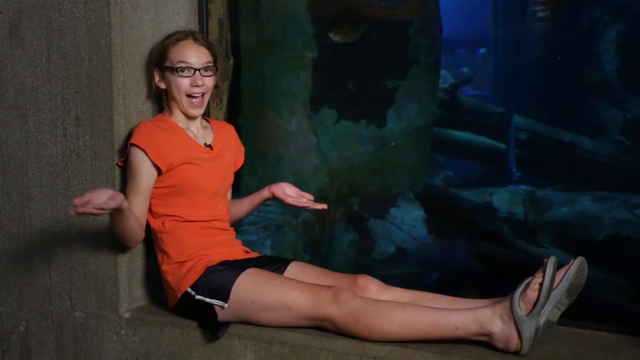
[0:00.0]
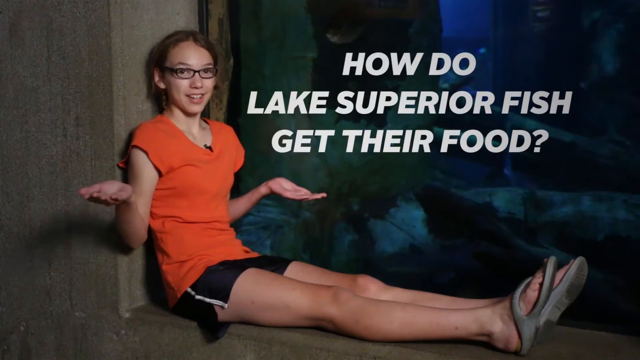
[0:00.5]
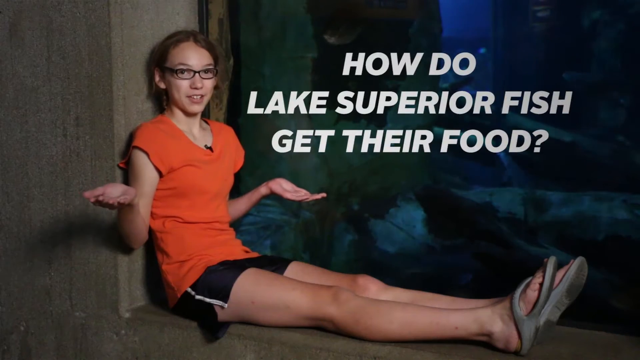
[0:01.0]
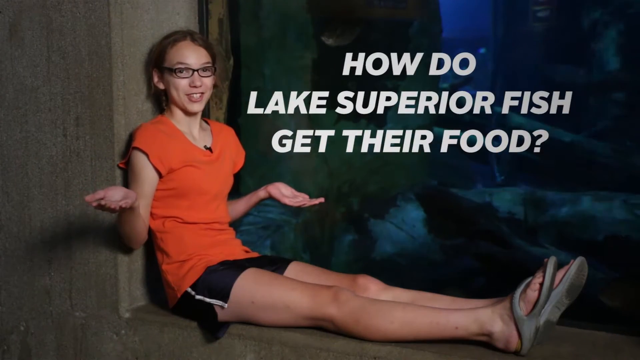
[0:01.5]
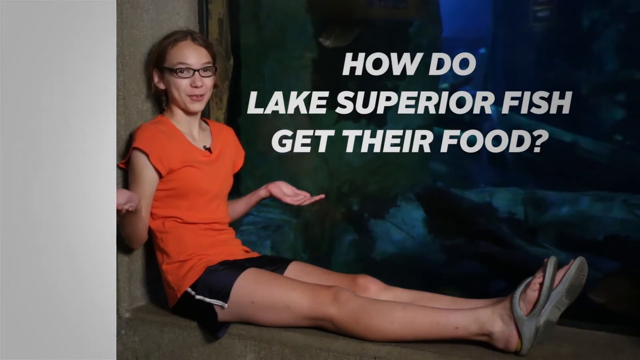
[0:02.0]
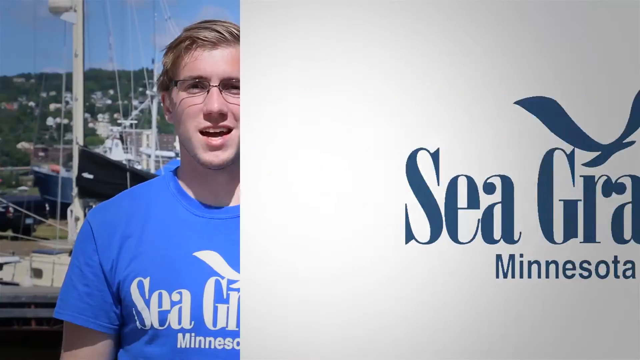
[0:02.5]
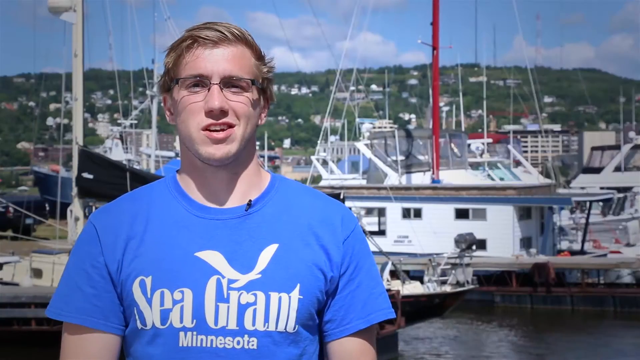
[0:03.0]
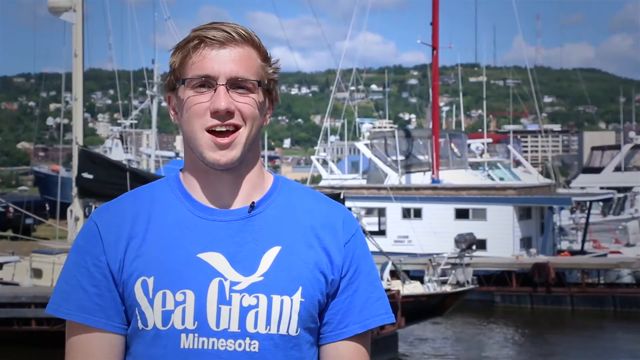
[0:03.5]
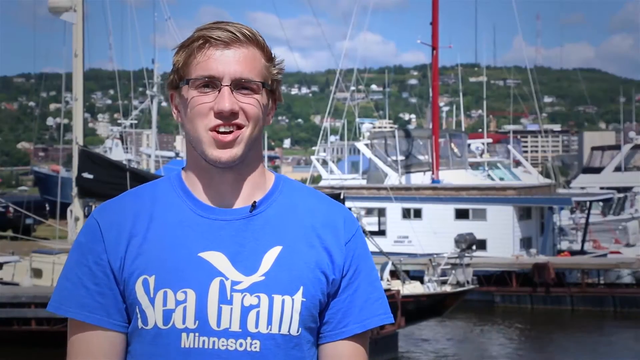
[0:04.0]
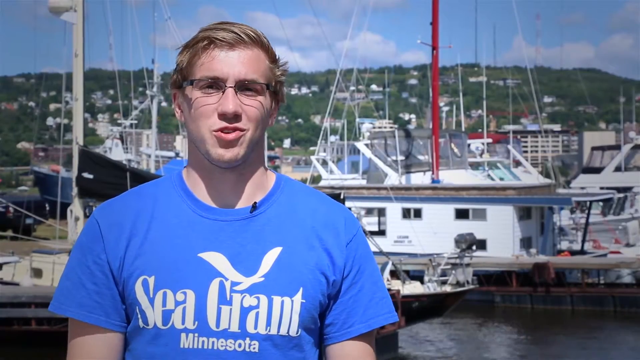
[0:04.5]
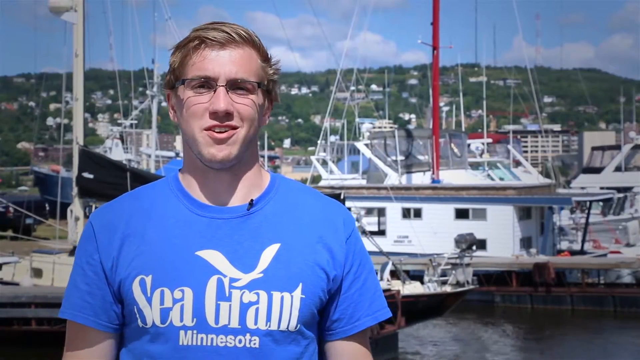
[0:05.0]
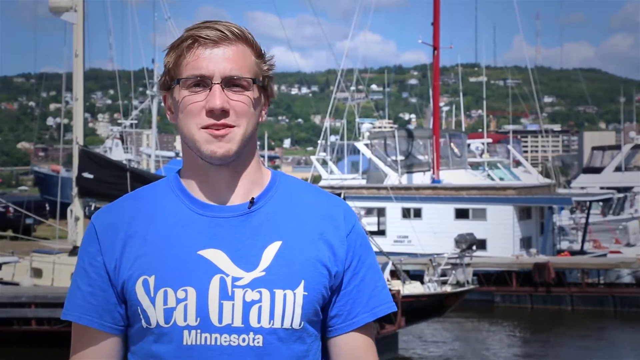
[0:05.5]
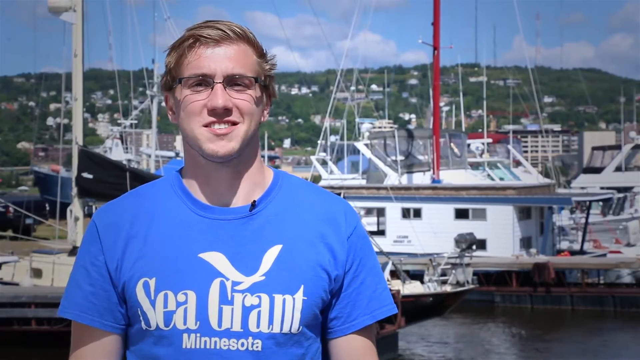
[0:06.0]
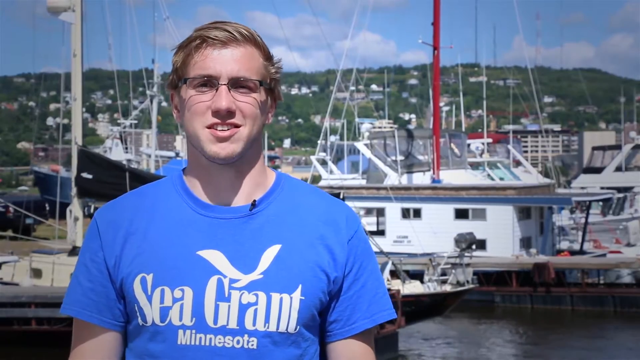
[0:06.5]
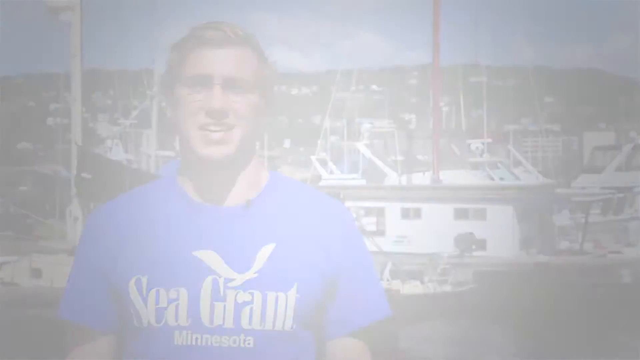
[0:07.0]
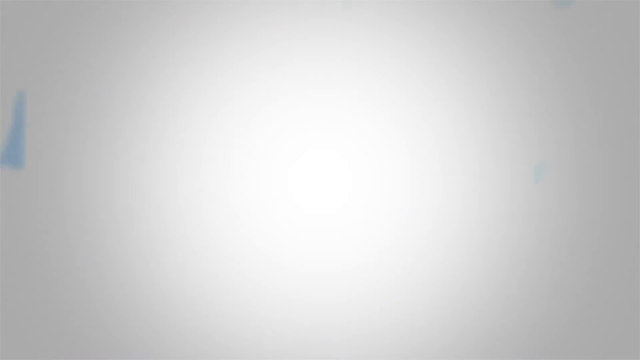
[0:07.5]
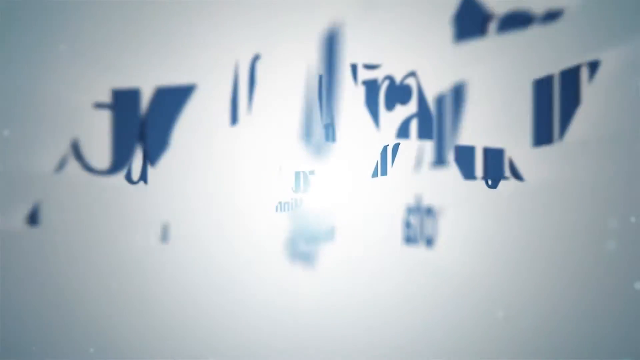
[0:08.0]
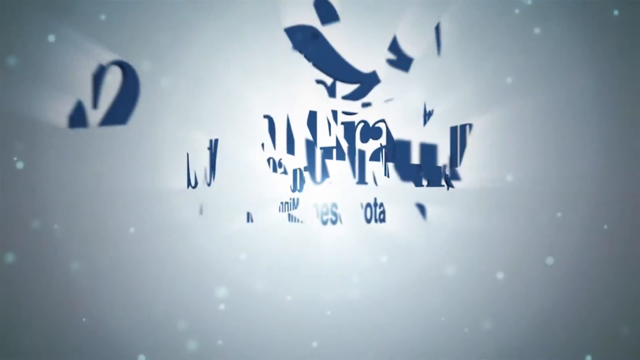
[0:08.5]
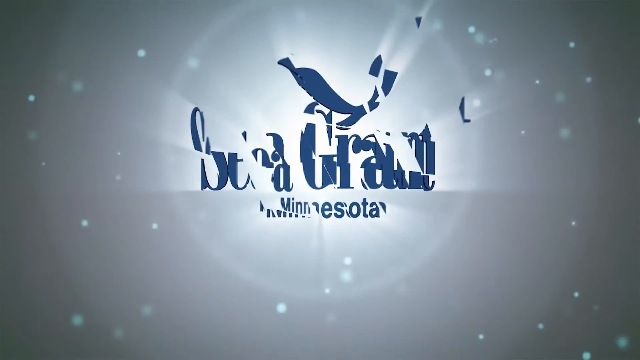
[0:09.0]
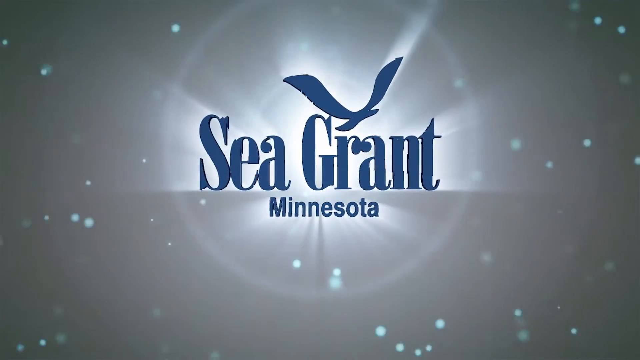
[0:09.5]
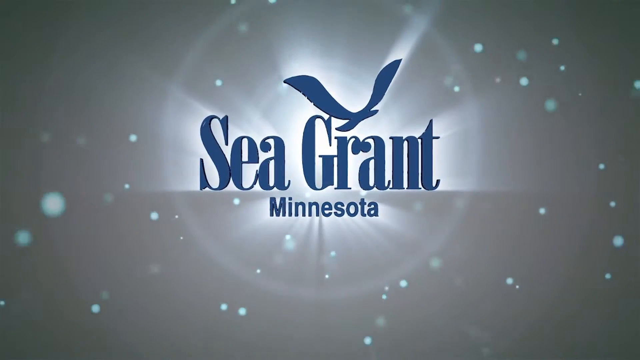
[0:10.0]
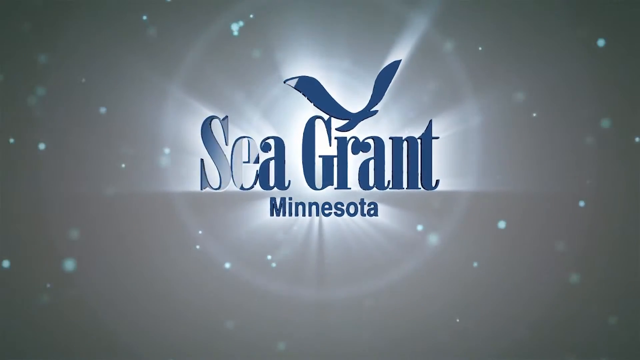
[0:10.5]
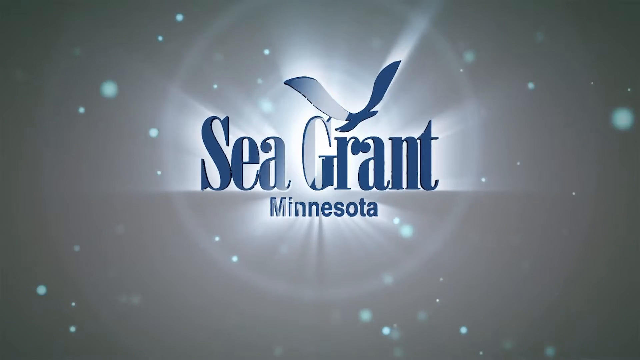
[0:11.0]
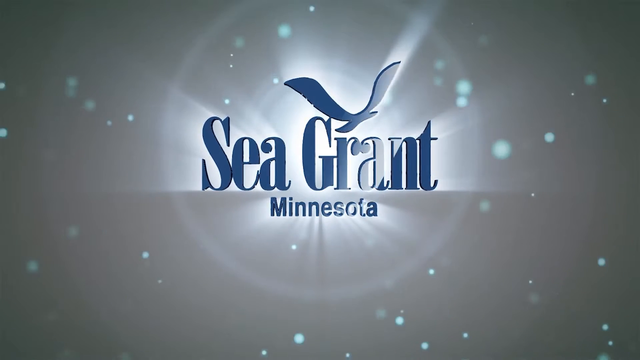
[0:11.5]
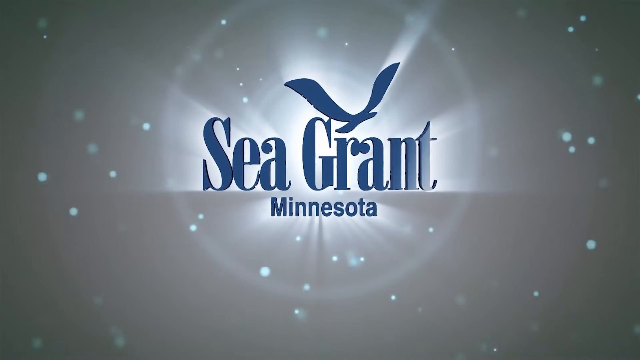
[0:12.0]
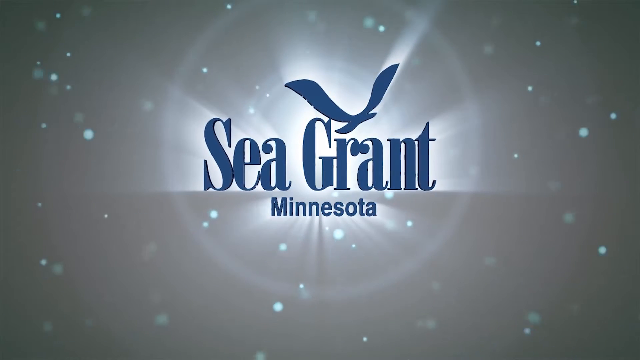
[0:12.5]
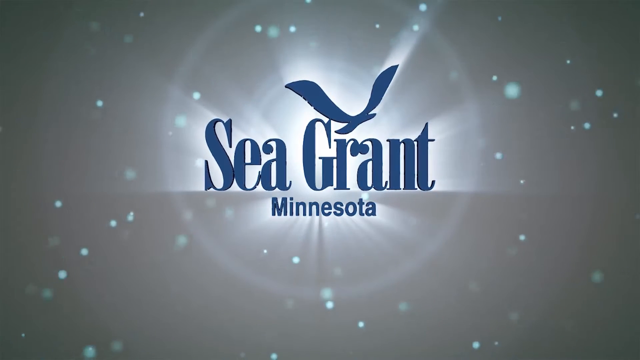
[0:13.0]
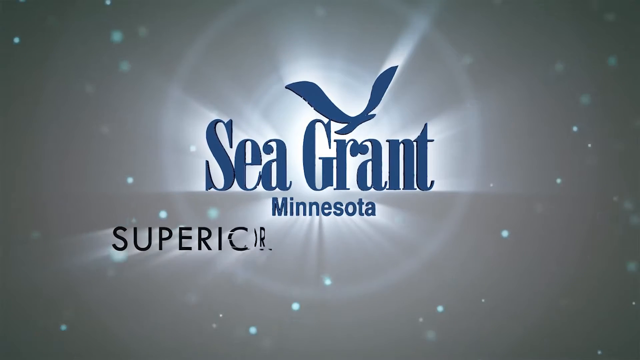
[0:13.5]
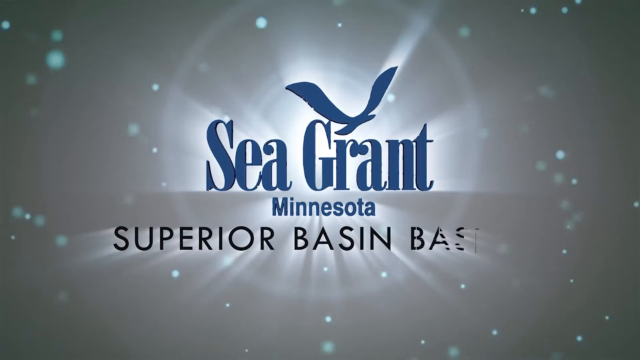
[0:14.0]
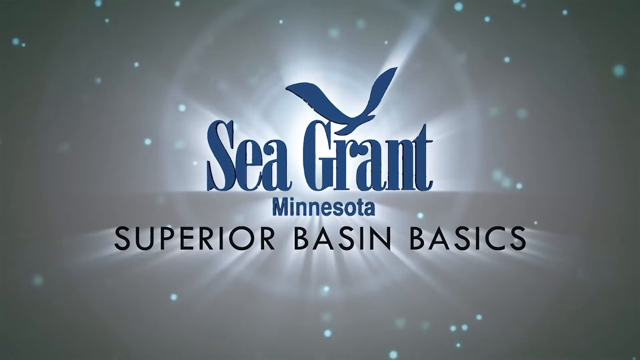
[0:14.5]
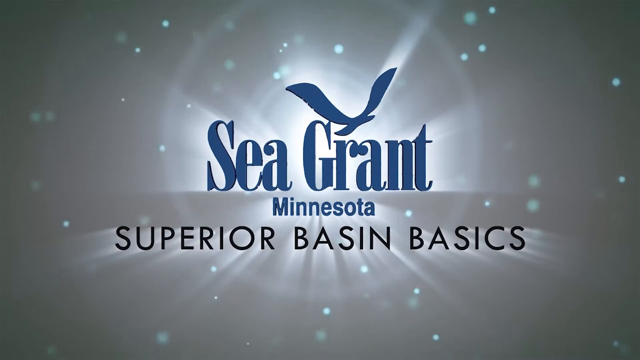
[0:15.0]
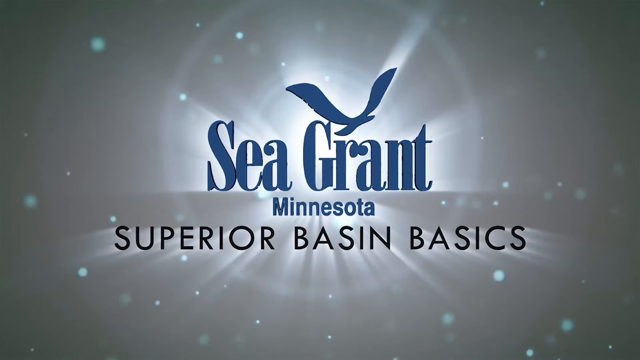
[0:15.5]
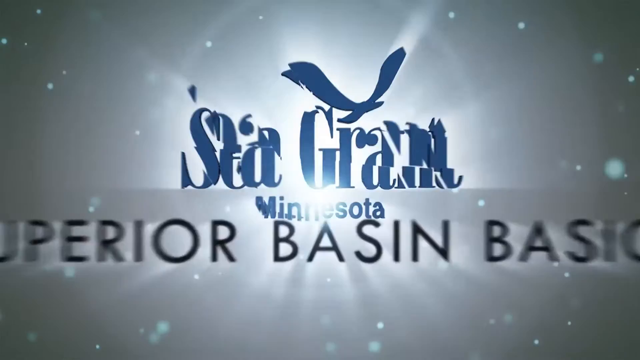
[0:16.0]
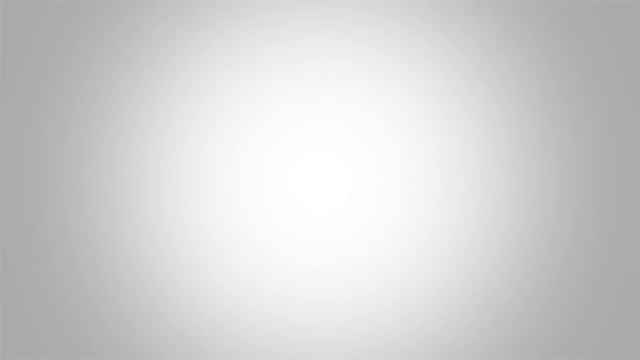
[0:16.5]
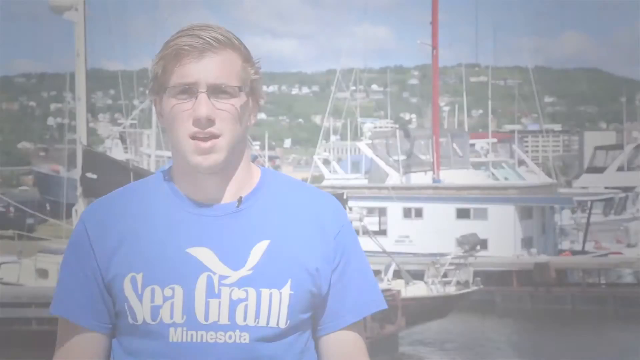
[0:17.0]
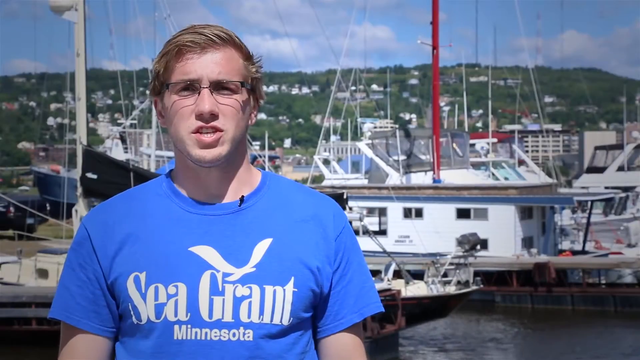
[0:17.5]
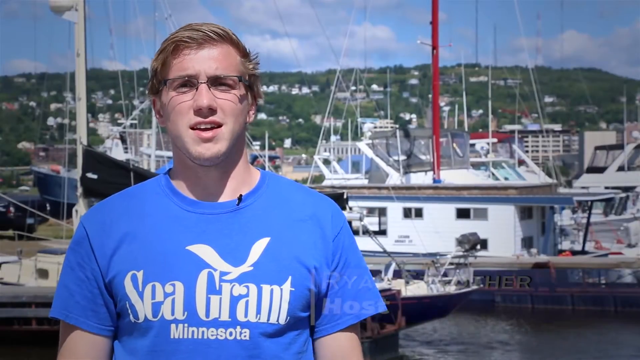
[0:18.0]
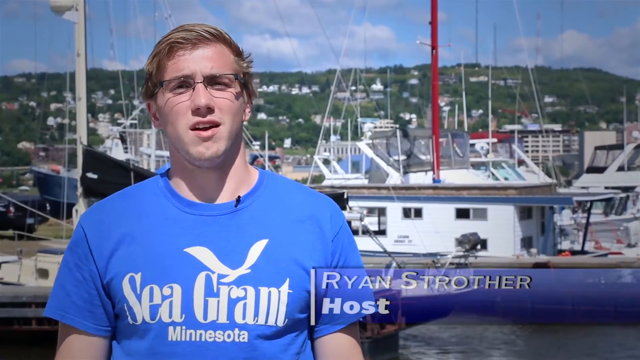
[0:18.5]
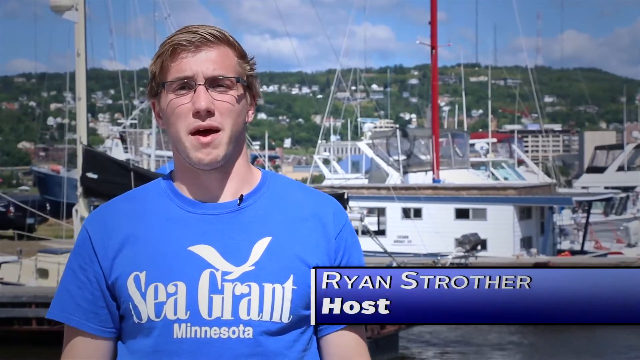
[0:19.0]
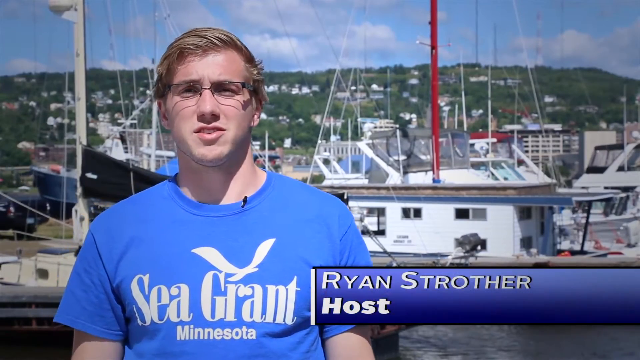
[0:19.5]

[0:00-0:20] The video is from Sea Grant Minnesota. It begins with a girl in an orange shirt holding out her arms while sitting in front of an aquarium. She wears flip-flops and glasses and asks the question, "How do Lake Superior fish get their food?" The video then cuts to a man with blonde hair and glasses wearing a blue shirt with the Sea Grant logo, standing in front of a bay area with a whole bunch of boats. Next comes a logo on a gray background with blue lettering reading "Sea Grant Minnesota," with little blue sparkles going around it, followed by "Superior Basin Basics" in black lettering. The video returns to the man in the blue shirt, and his name appears below him, "Ryan Strother," identifying him as the host.